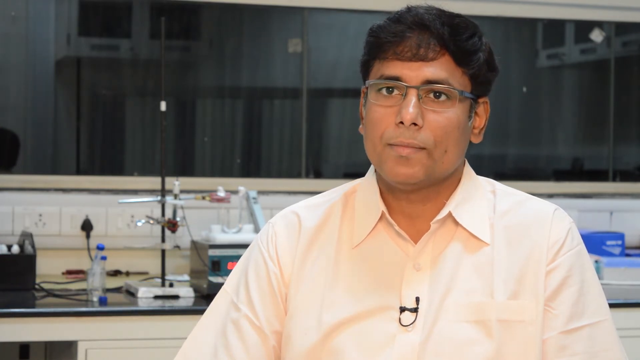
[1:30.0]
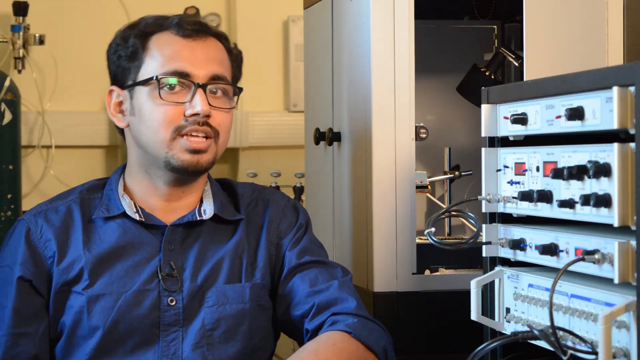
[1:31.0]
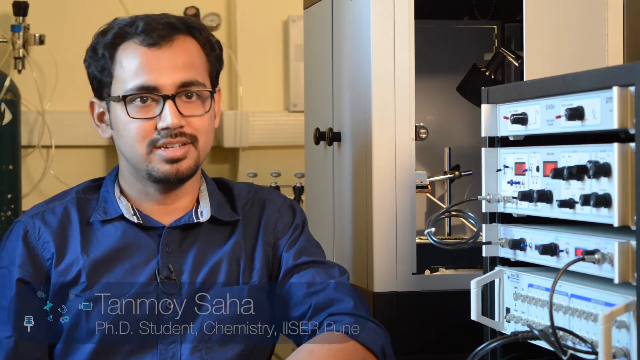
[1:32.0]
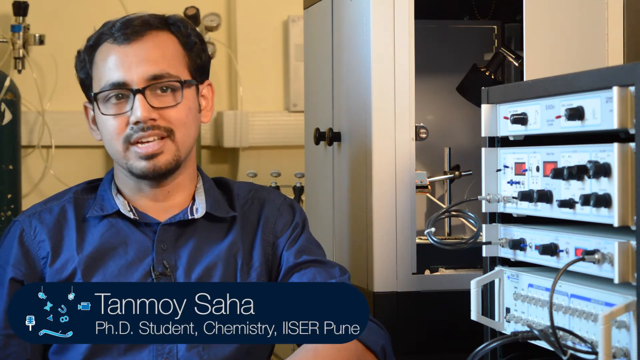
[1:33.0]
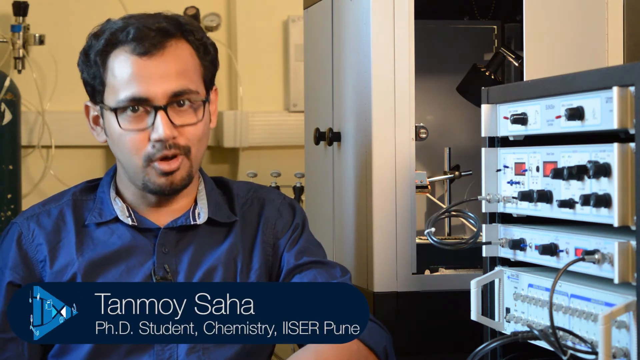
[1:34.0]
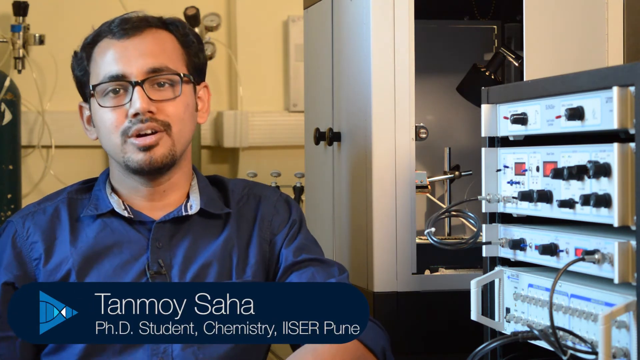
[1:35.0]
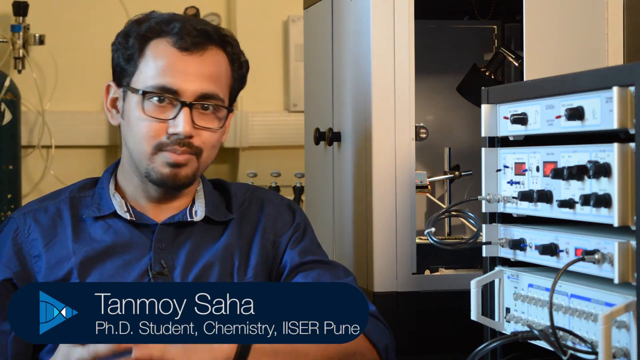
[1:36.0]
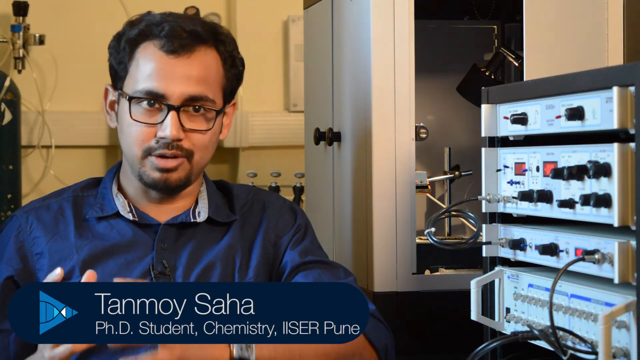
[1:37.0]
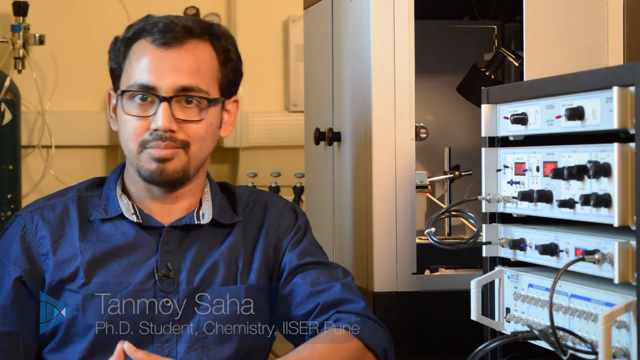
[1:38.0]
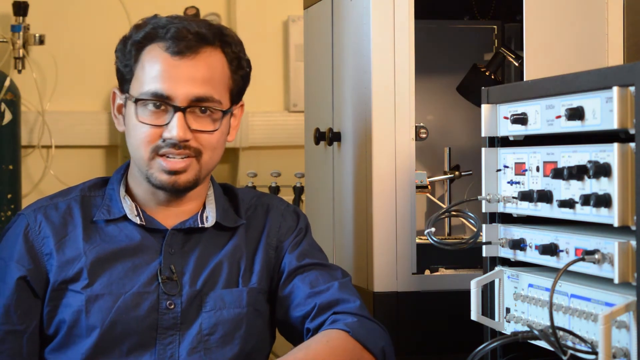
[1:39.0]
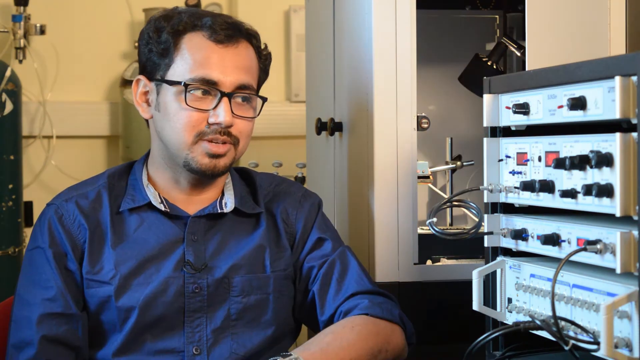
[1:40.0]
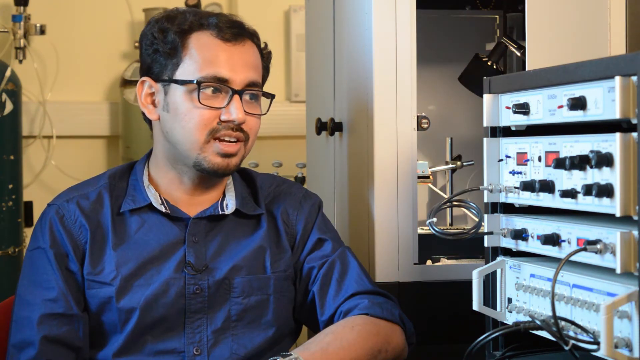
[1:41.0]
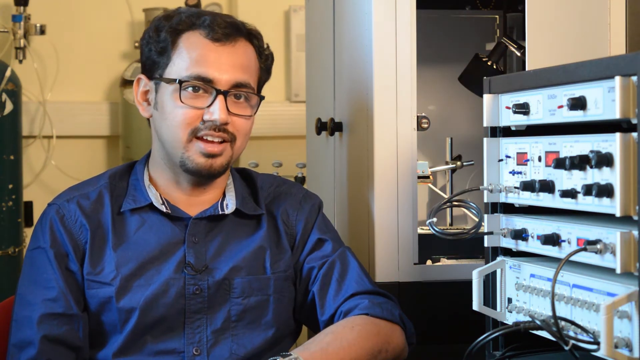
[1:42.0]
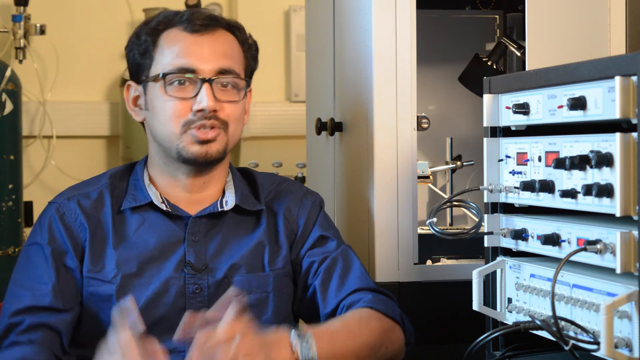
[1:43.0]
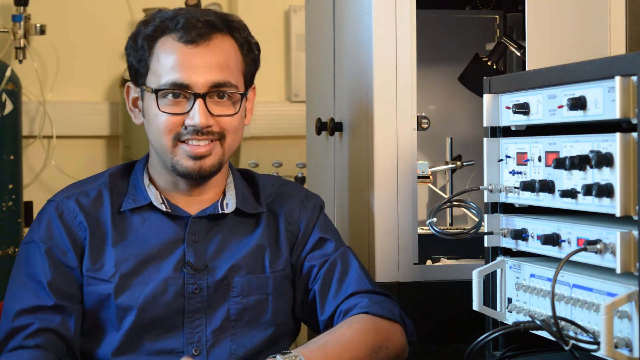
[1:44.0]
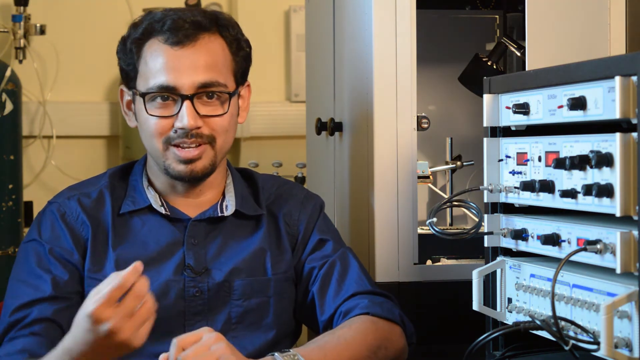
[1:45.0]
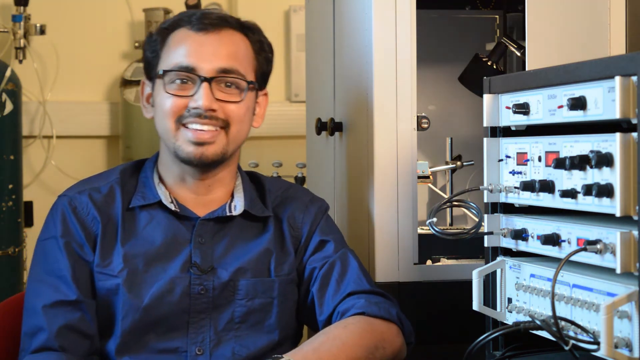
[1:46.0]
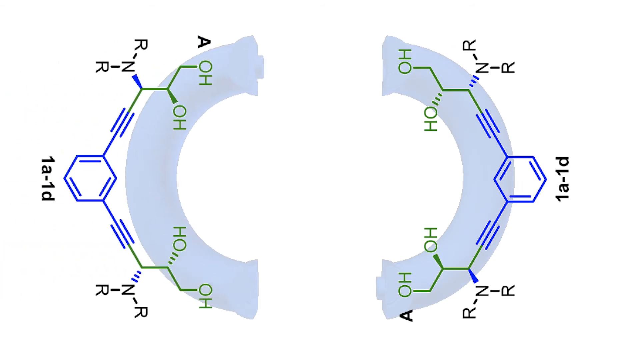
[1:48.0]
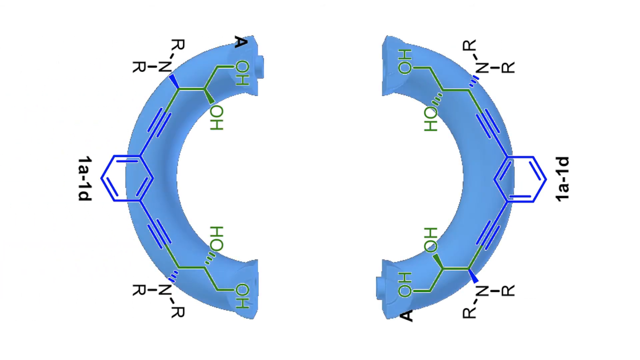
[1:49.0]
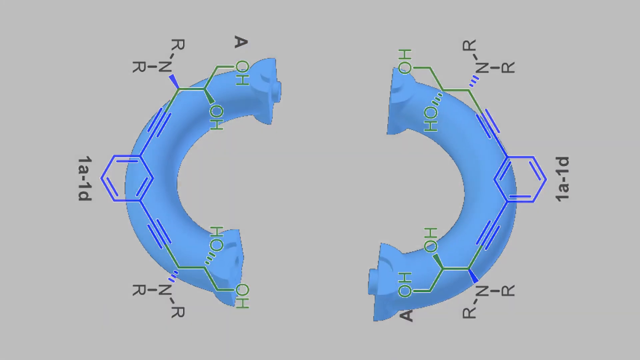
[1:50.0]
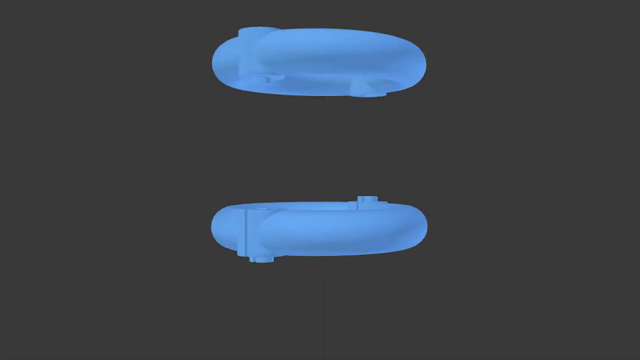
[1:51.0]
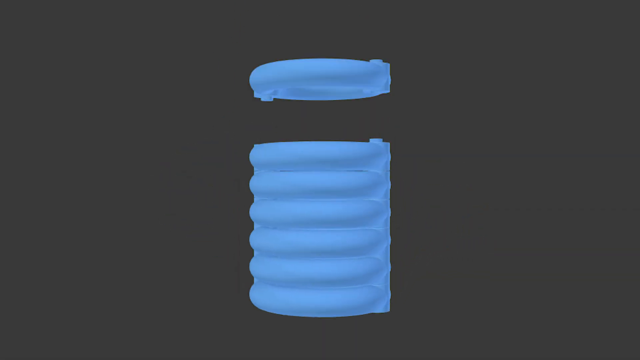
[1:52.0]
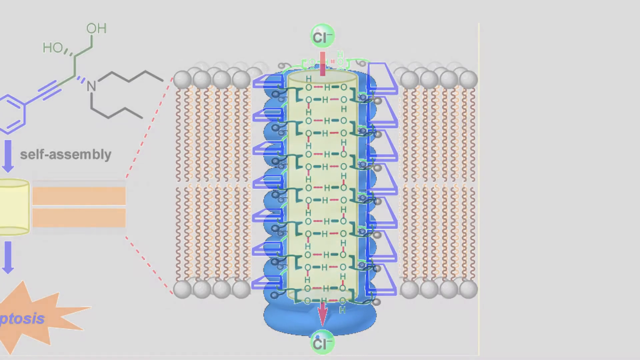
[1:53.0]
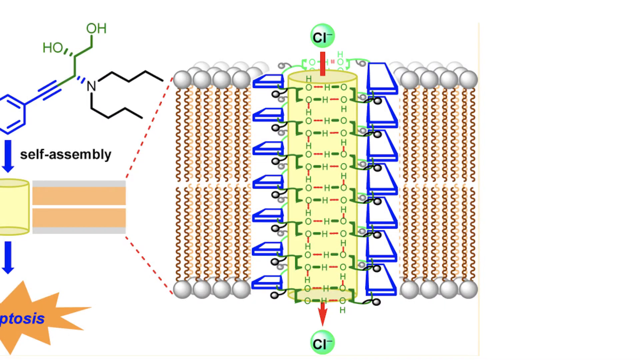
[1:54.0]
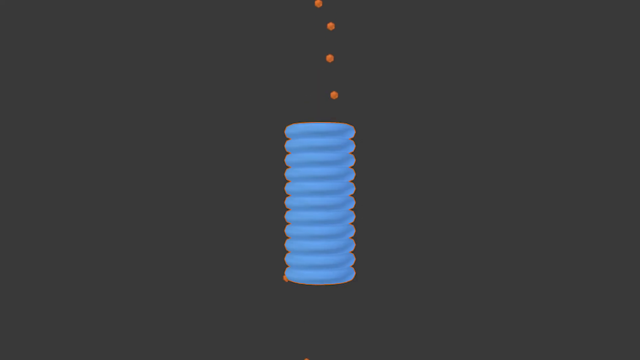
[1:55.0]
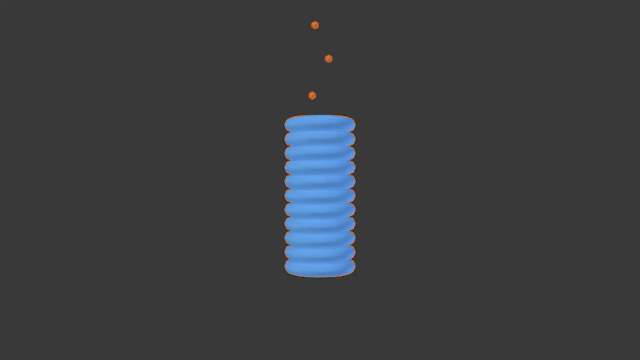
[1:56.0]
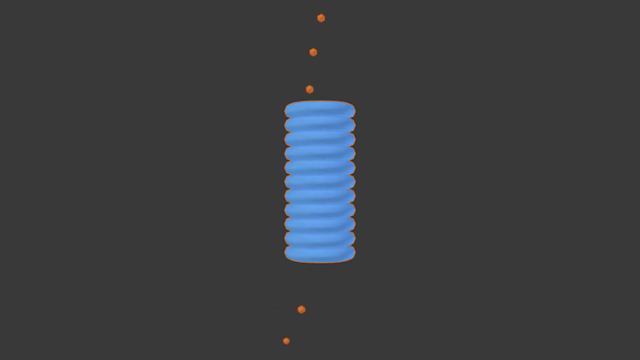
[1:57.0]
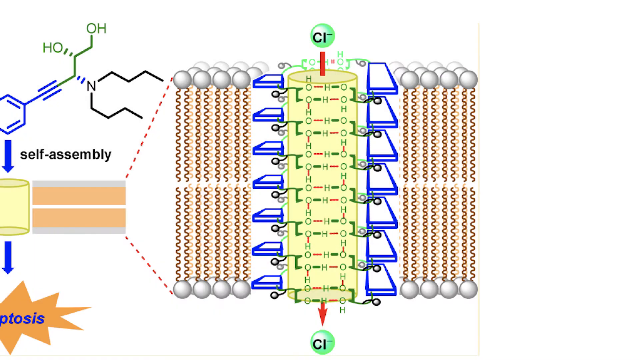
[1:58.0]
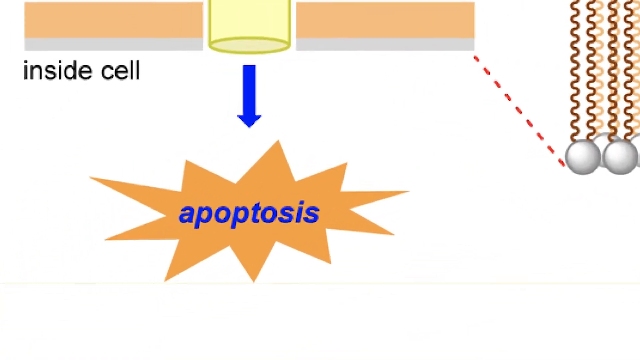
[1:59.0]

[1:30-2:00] A man who looks to be a scientist, apparently Indian, with dark hair and a light-colored button-down shirt, appears first. Then another man, perhaps also Indian, is shown with dark hair, a mustache, a goatee and a blue shirt, with some type of machinery to his left suggesting he may also be a scientist. His name appears: Timoy Sia, a PhD student in chemistry at Kaiser Poon. He continues talking.